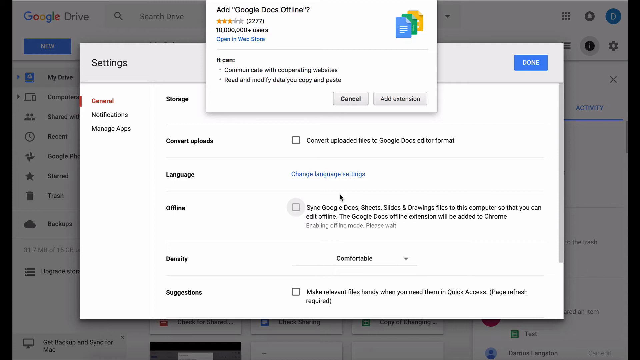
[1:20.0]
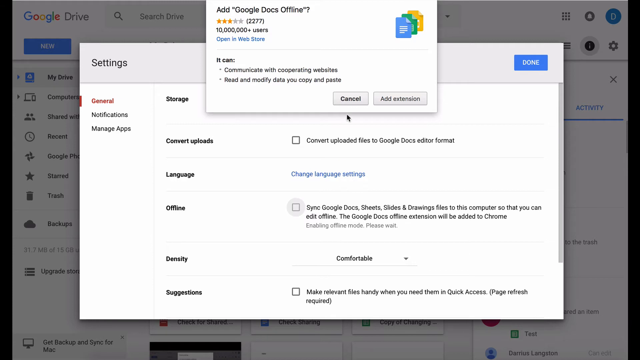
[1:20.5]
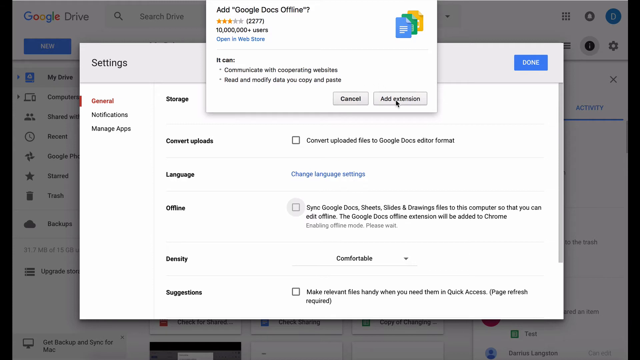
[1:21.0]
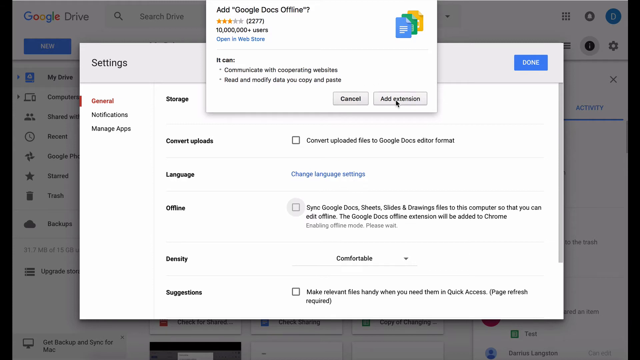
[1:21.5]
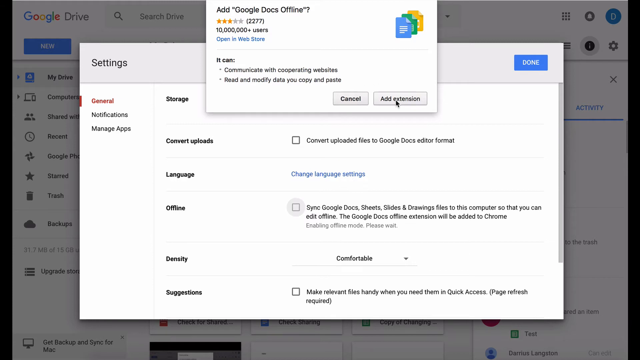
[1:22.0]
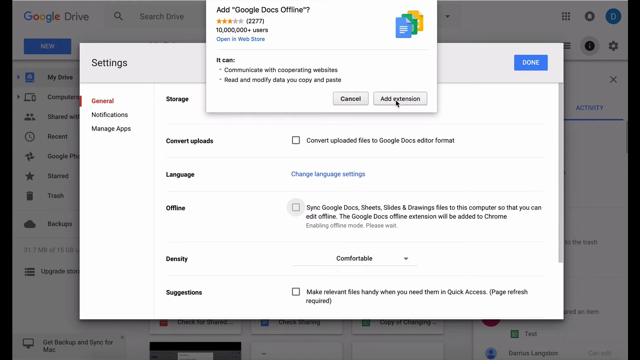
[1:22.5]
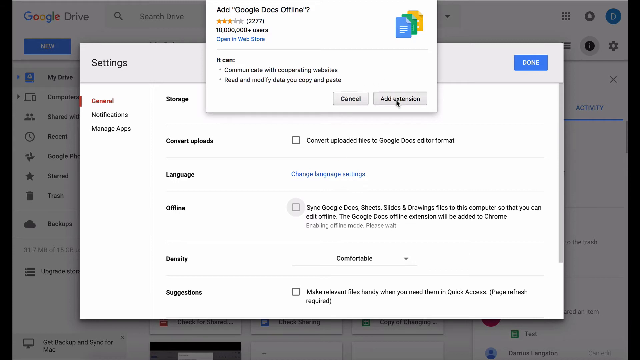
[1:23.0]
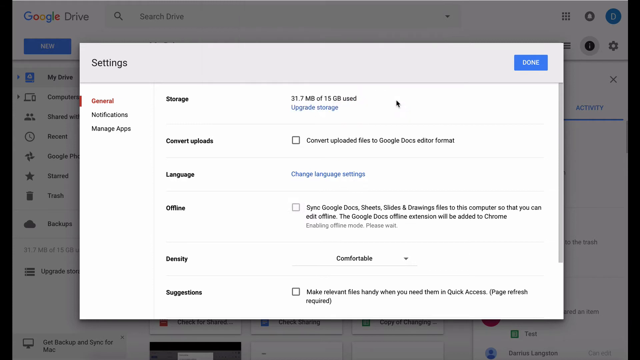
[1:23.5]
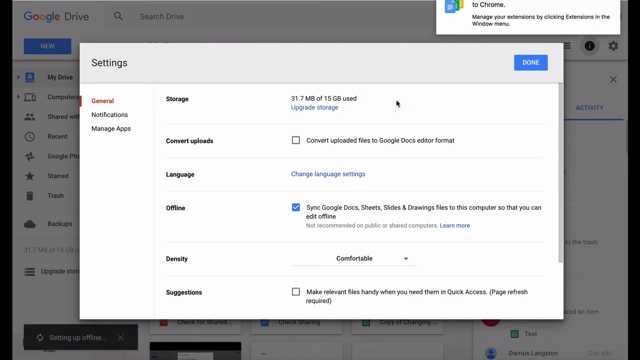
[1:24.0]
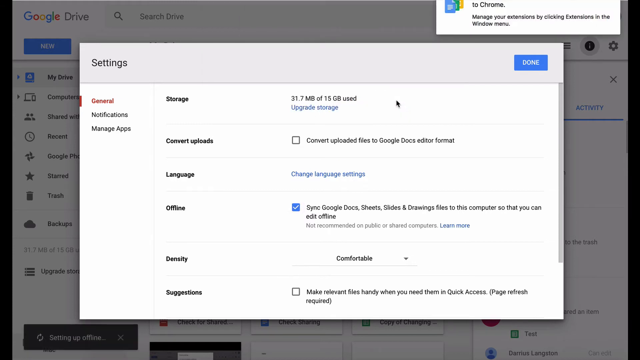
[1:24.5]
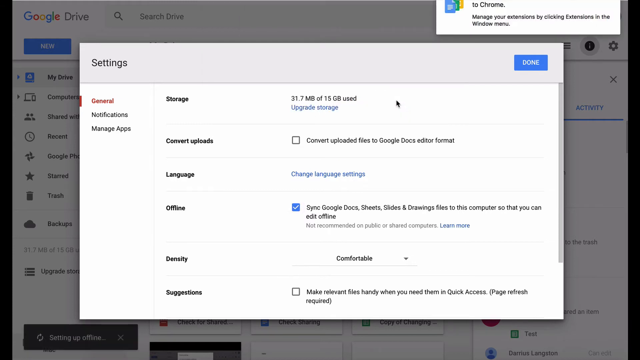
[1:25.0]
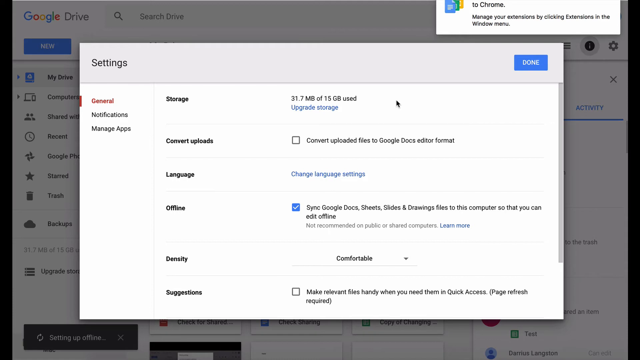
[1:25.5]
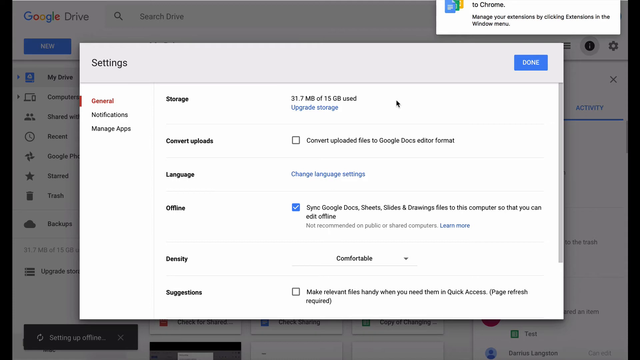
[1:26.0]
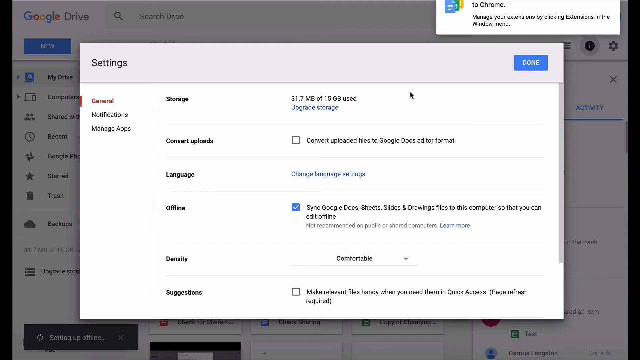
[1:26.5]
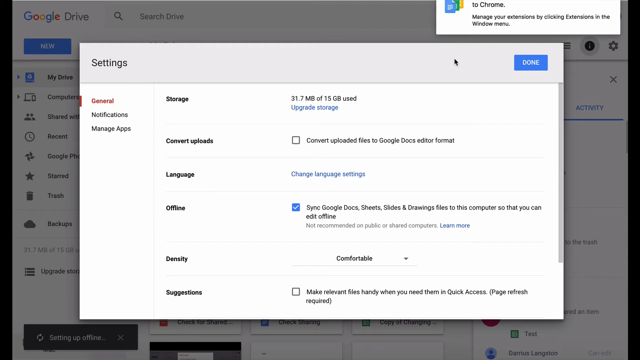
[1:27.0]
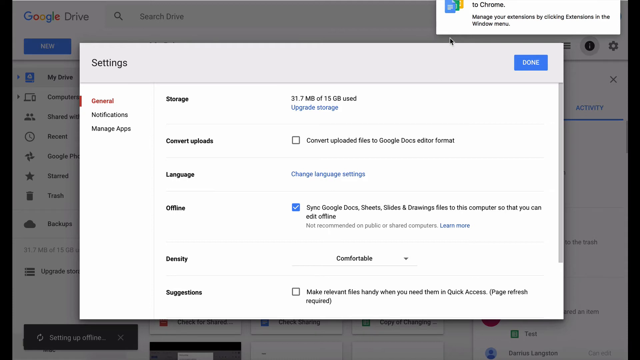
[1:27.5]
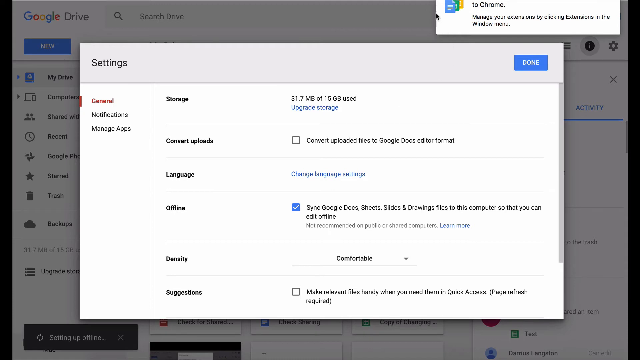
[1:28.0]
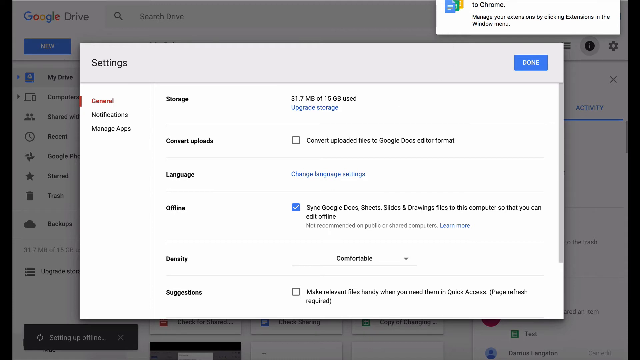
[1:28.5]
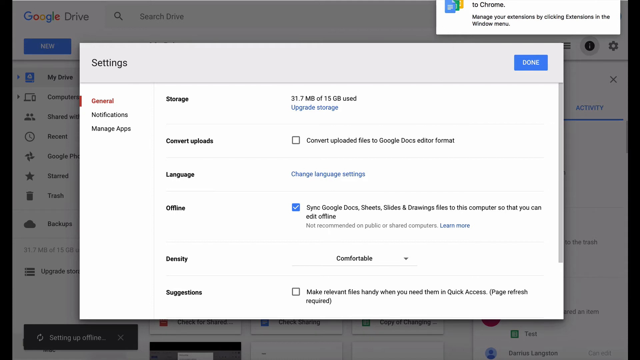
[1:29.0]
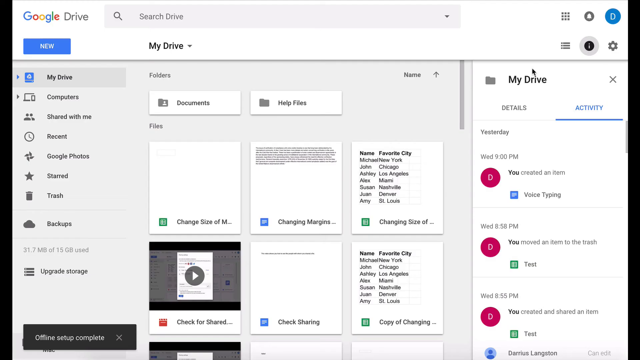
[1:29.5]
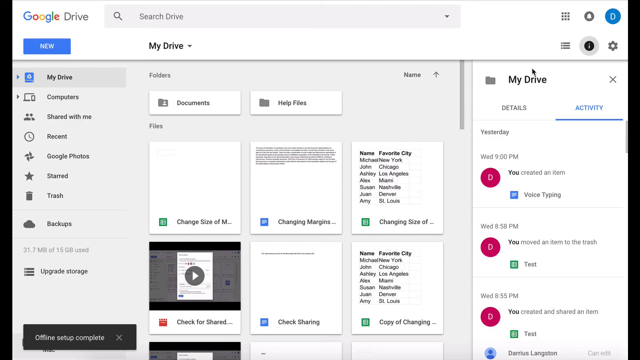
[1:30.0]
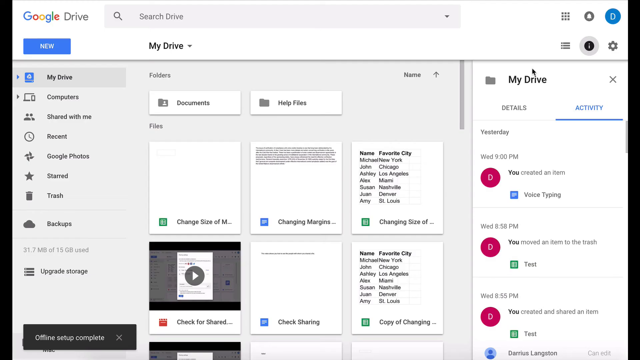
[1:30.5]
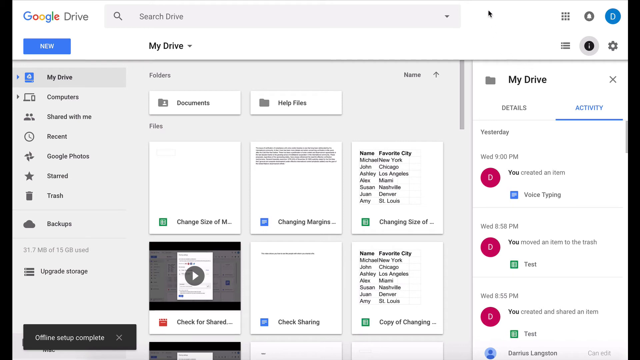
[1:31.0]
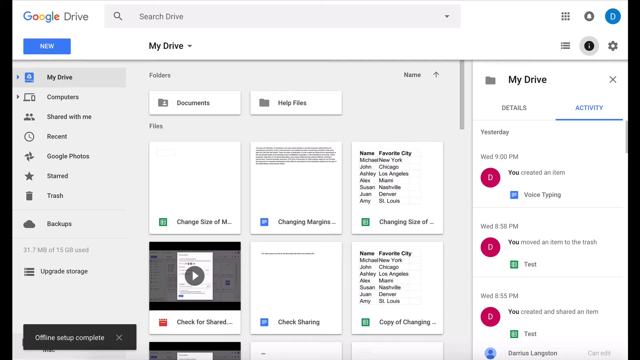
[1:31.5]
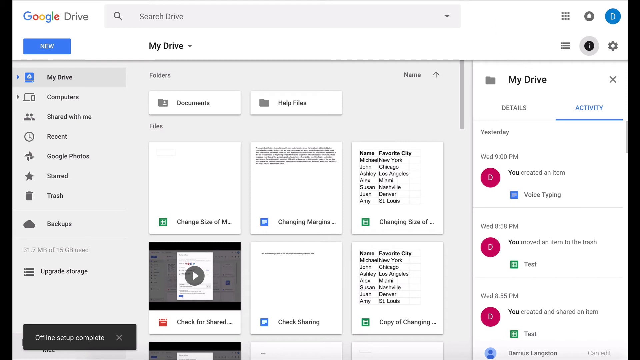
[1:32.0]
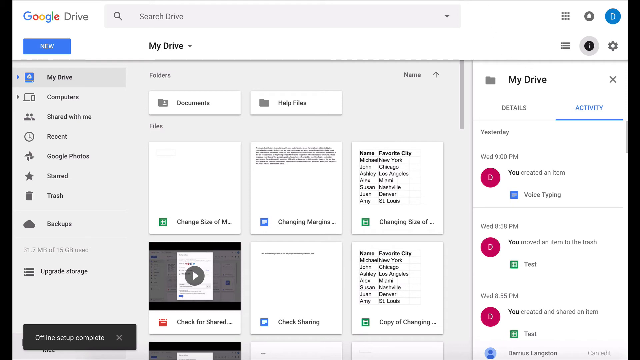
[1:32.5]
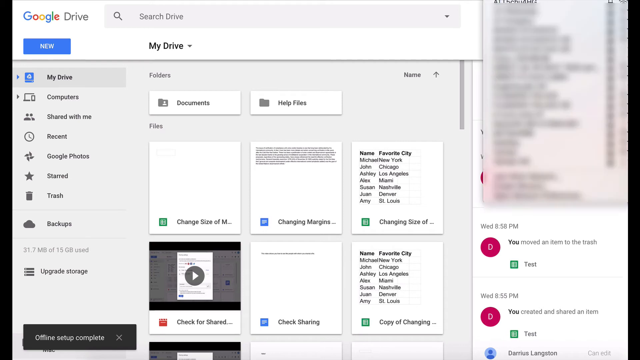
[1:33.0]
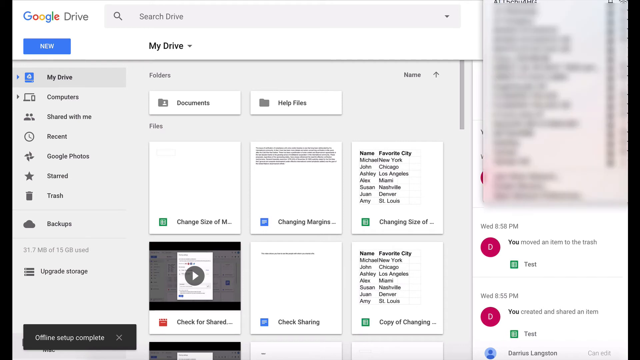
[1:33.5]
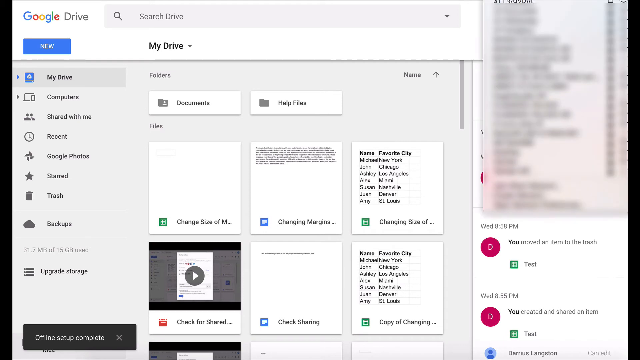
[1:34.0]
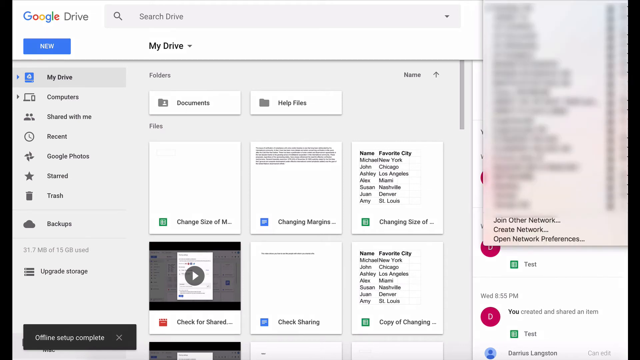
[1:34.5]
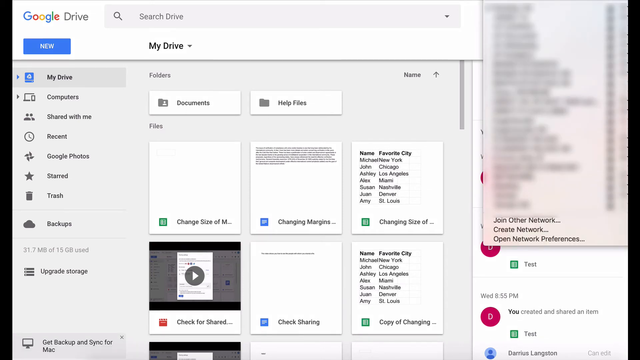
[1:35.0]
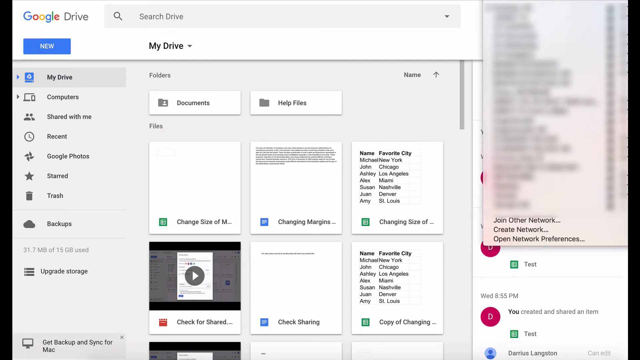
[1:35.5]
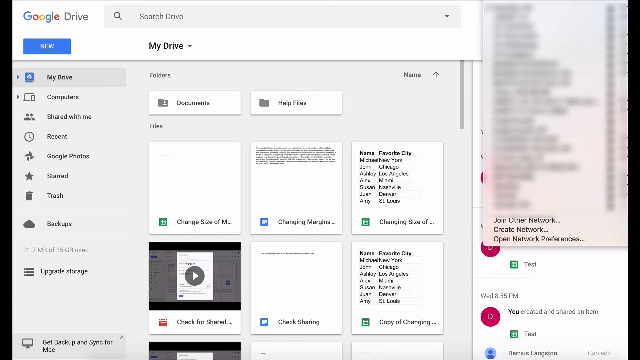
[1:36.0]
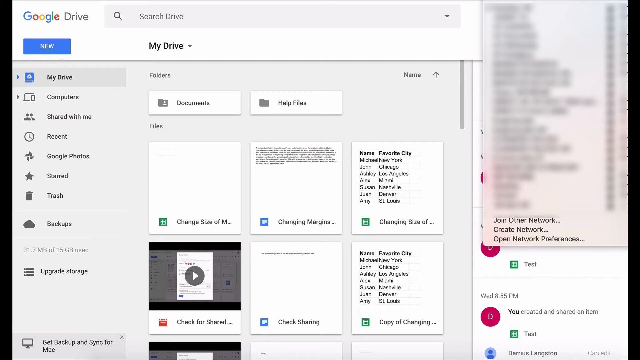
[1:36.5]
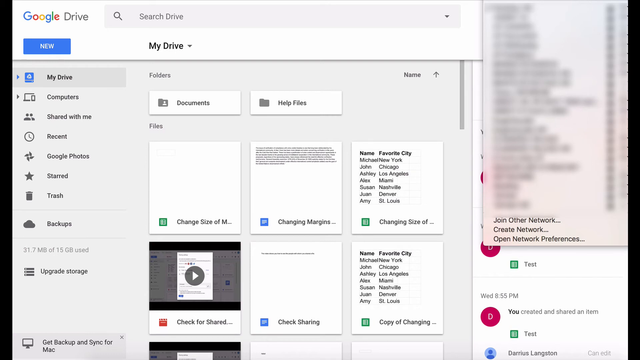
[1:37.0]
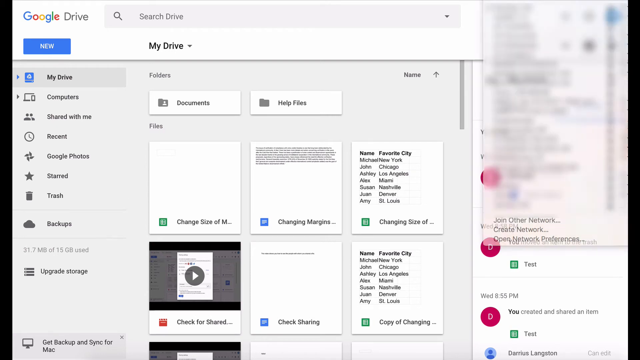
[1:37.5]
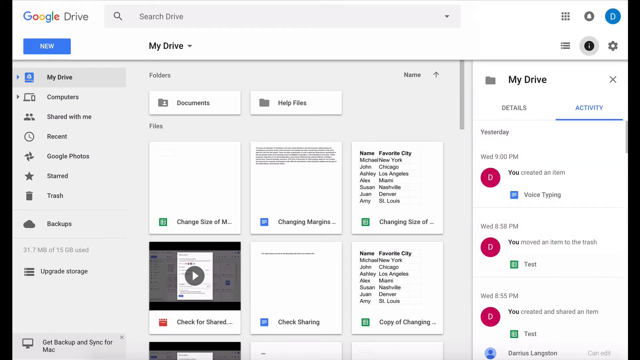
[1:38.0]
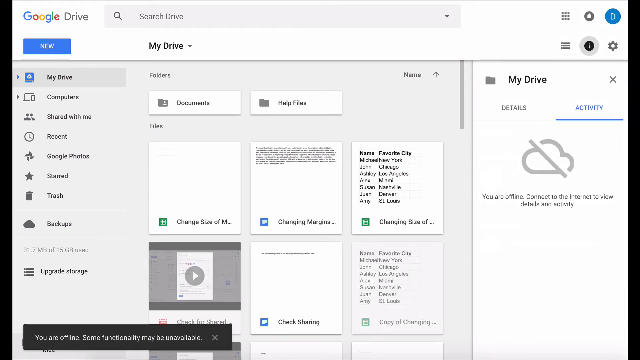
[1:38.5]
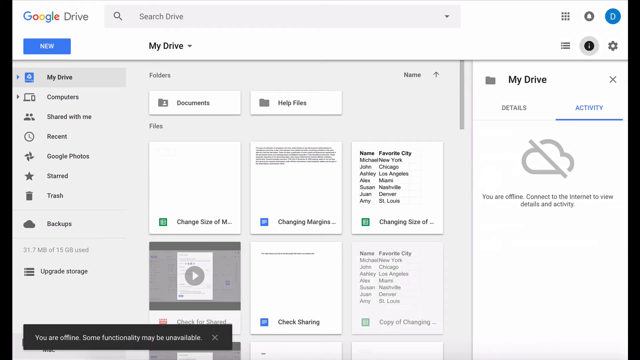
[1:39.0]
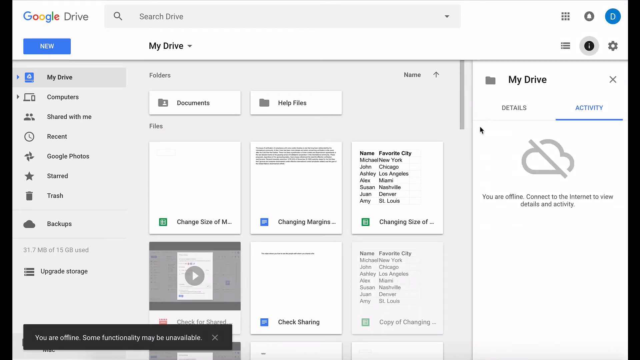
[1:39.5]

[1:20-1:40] What appears to be the Google Drive website shows, at the top, "Add Google Docs Offline", with a three-out-of-five-star rating, 2,277 reviews, "10 million plus users" and "Open in Web Store". It lists that it can communicate with cooperating websites and read and modify data you copy and paste, and asks whether to add the extension or cancel. The user chooses to add the extension. Then a settings menu with "General", "Notifications" and "Manage apps" is shown, with General selected. It shows 31.7 megabytes of 15 gigabytes used, with "Upgrade storage" in blue letters below. Below that is "Convert uploads" with an unchecked checkbox next to it and "Convert uploaded files to Google Docs editor format". Below that is "Language" in black text, with "Change language settings" in blue text next to it.